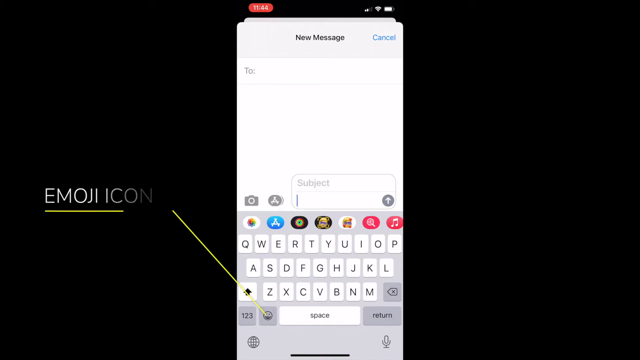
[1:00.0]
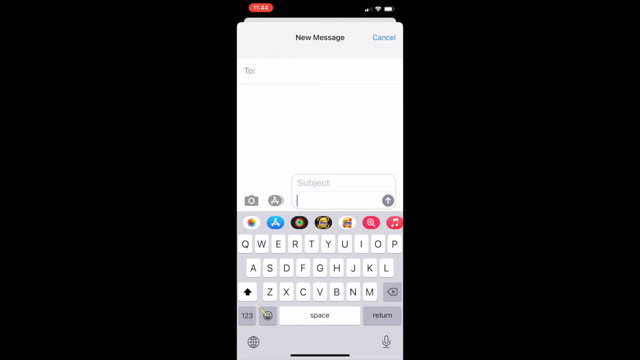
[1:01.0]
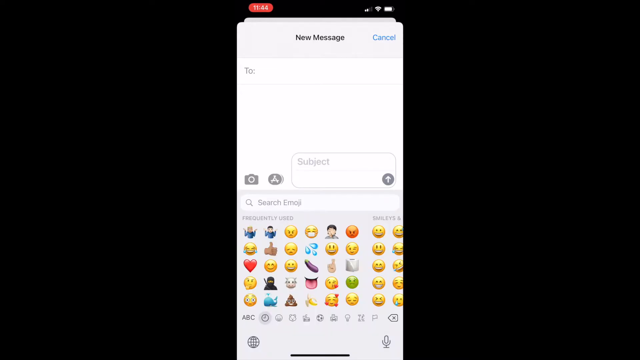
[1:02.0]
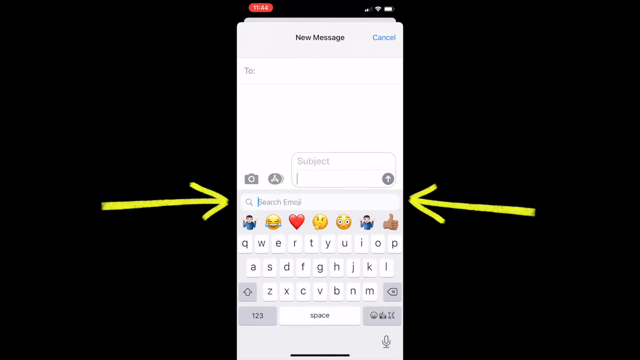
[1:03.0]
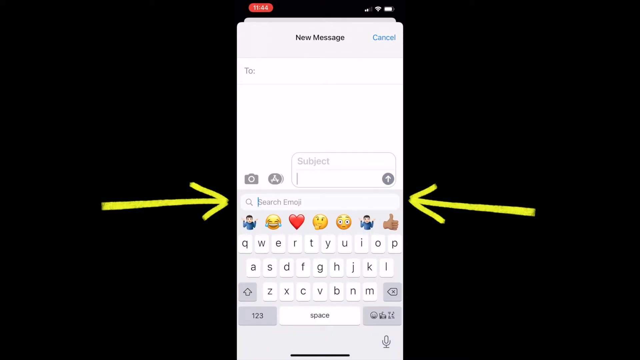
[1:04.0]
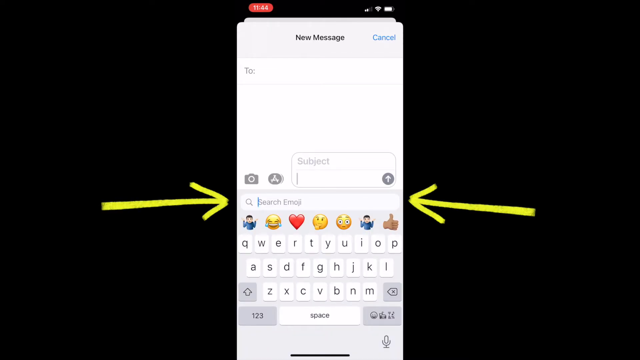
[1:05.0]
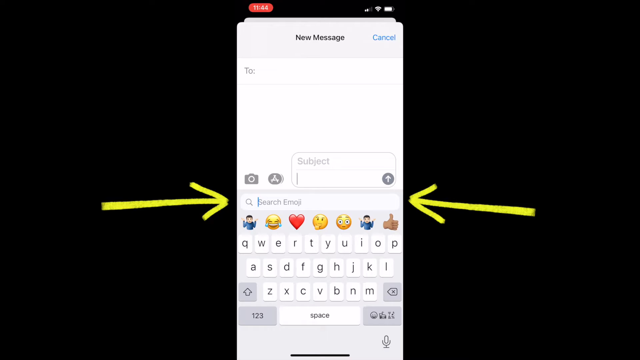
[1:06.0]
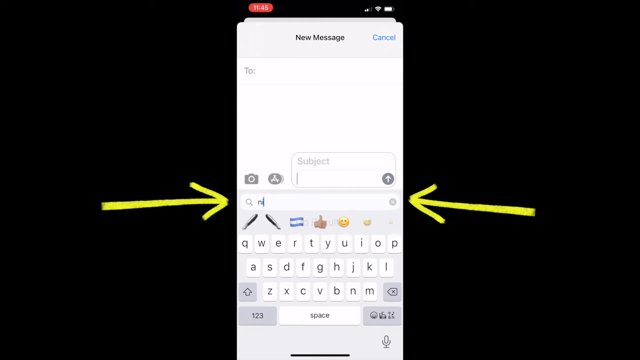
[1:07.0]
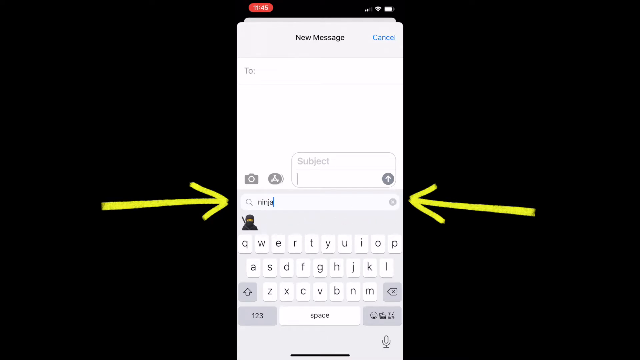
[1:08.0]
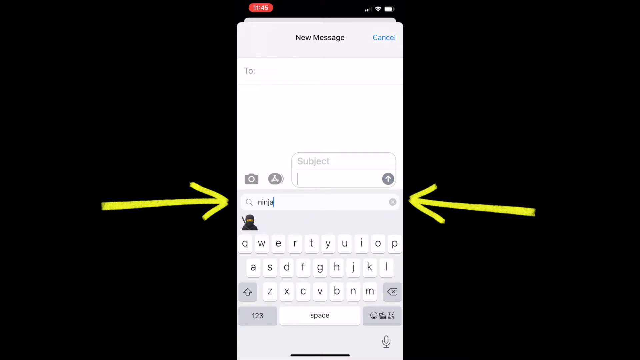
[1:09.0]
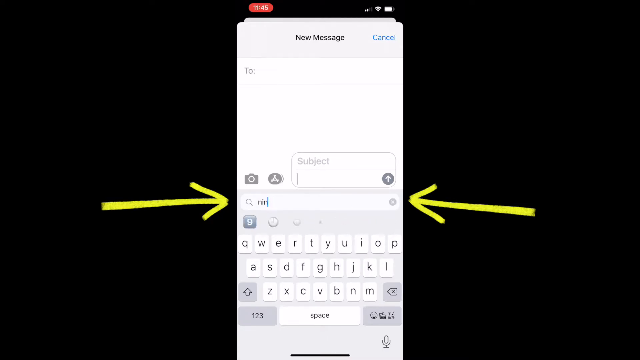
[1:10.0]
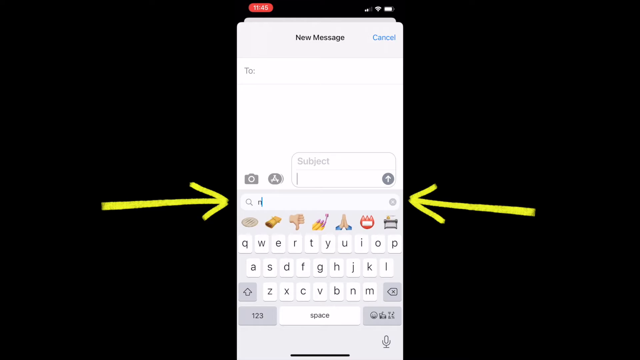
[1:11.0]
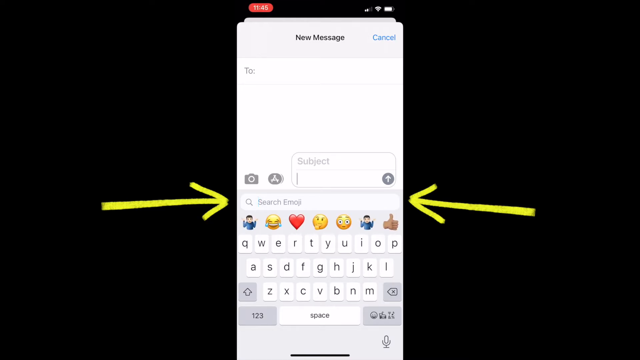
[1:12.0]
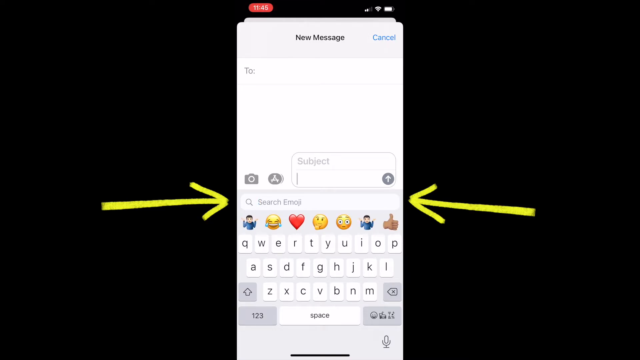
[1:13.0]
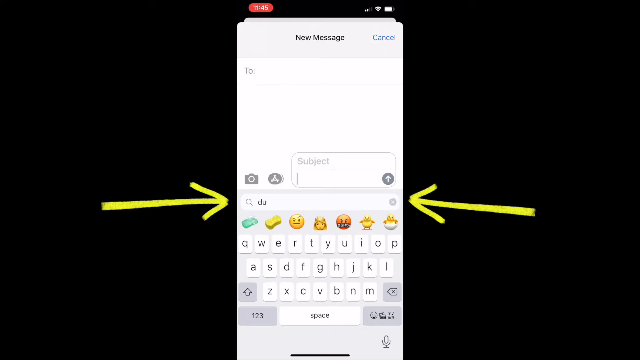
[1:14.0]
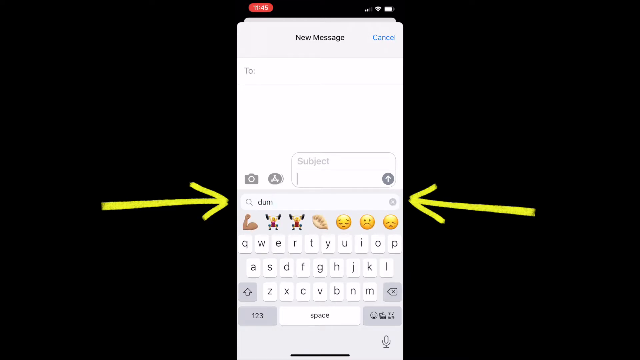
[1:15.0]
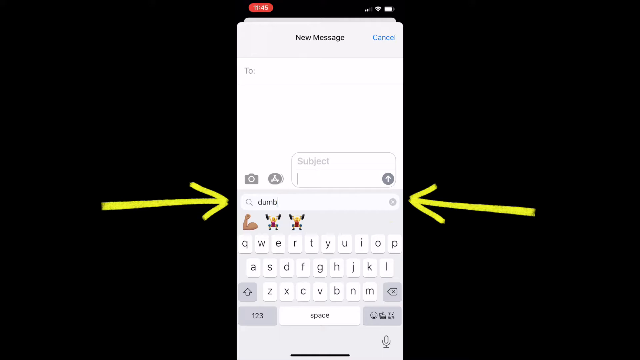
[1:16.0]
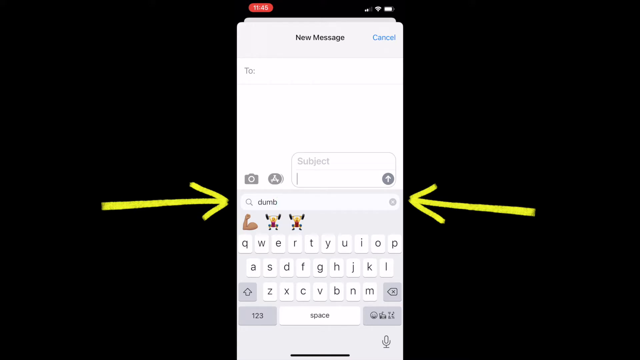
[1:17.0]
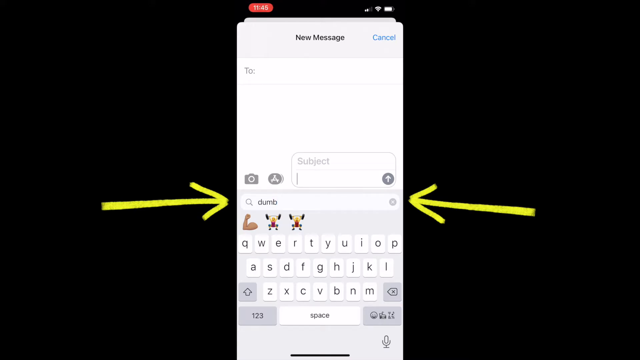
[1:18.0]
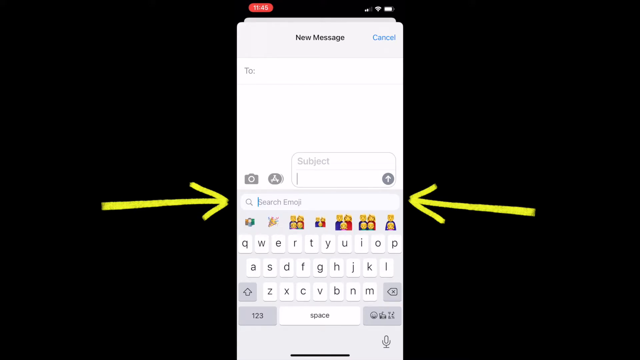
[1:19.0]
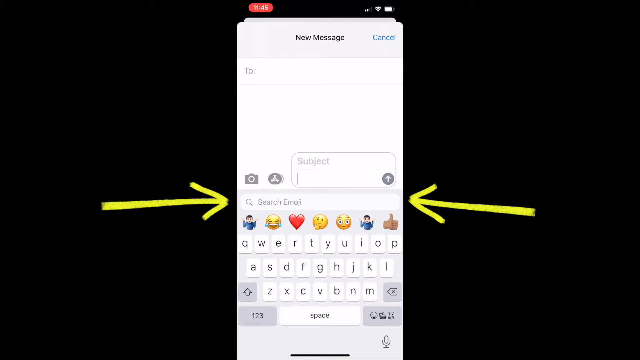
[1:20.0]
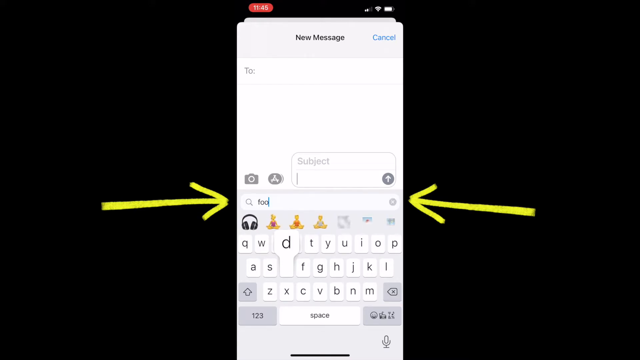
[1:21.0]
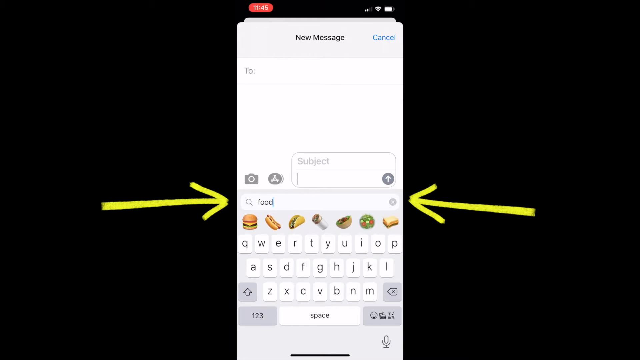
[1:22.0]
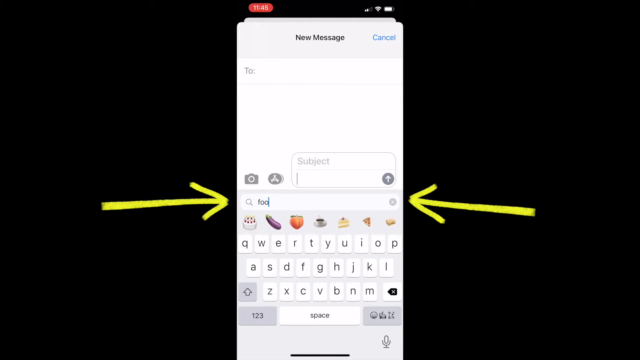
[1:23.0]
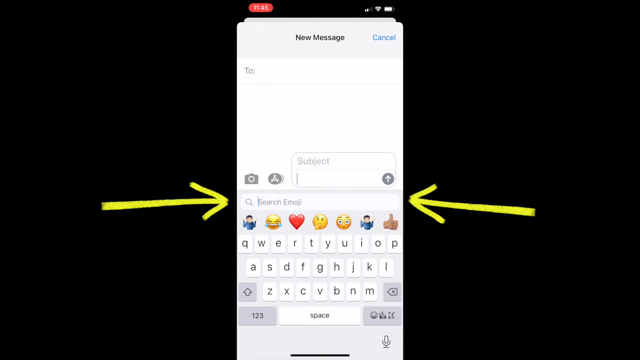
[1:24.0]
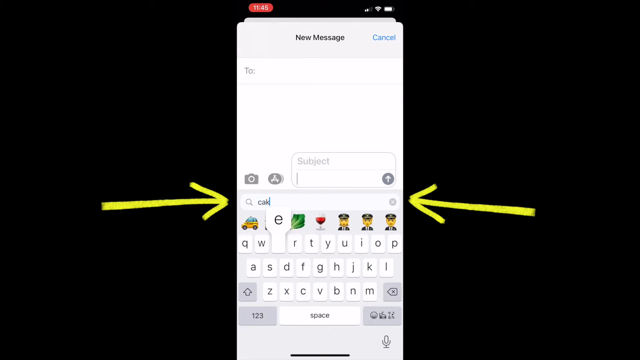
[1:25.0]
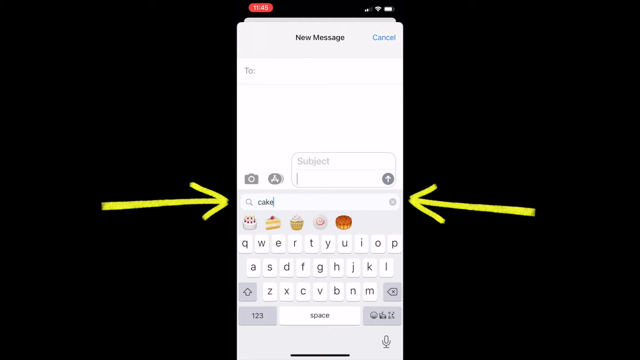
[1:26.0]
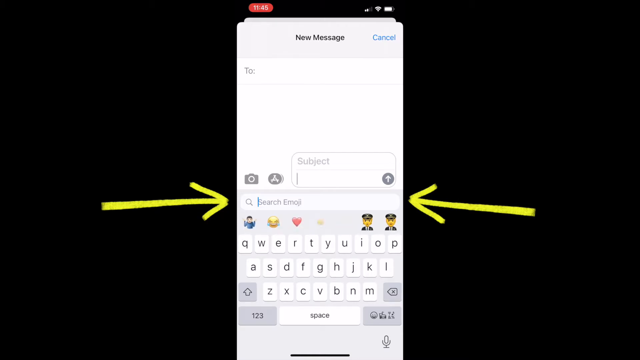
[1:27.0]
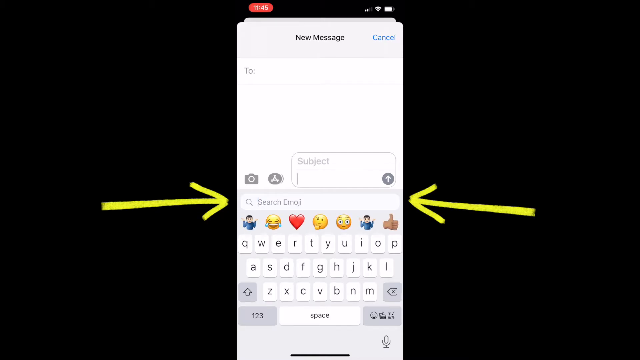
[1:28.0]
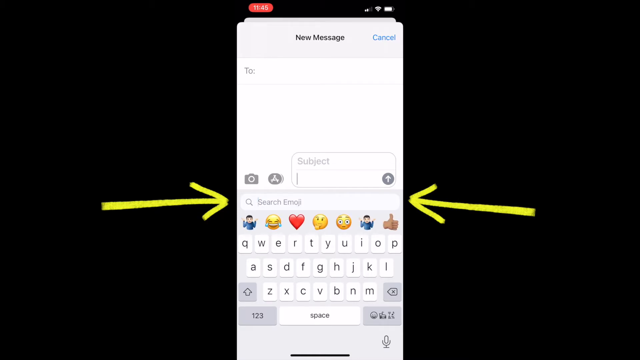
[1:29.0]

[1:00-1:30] The black screen with the phone's message view in the middle continues, pointing to the emoji icon. The emoji icon is clicked, and two yellow arrows point to where a word can be typed to search. "Ninja" is typed in and pictures come up. Then the words "dumb," "food" and "cake" are typed in, and each time a word is typed, different emojis pop up to choose from.